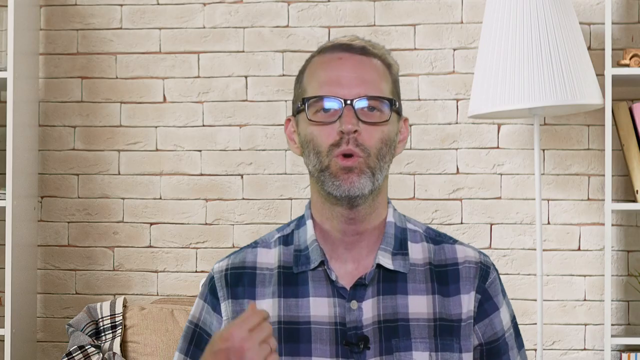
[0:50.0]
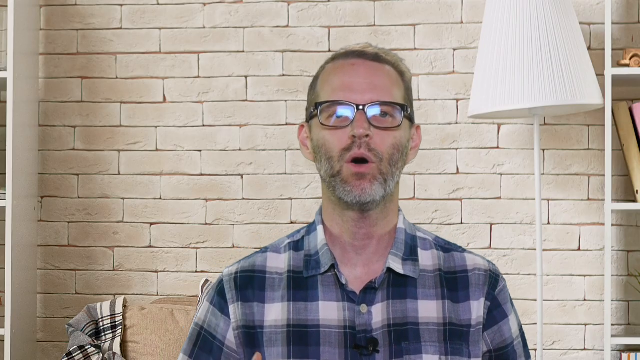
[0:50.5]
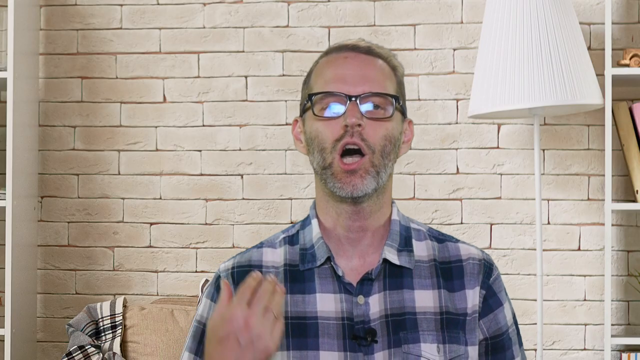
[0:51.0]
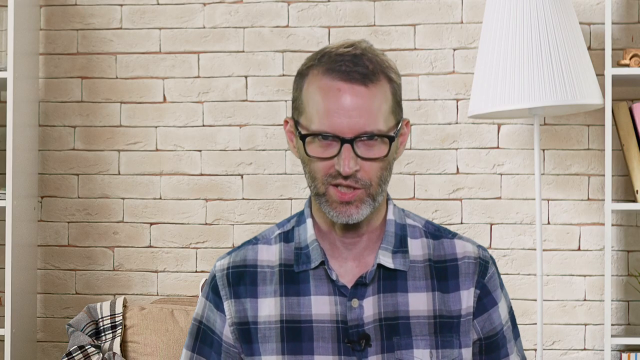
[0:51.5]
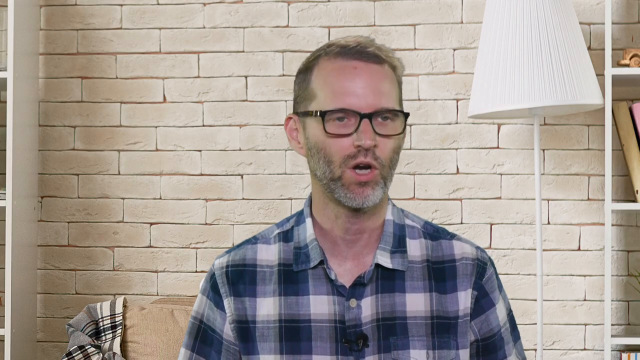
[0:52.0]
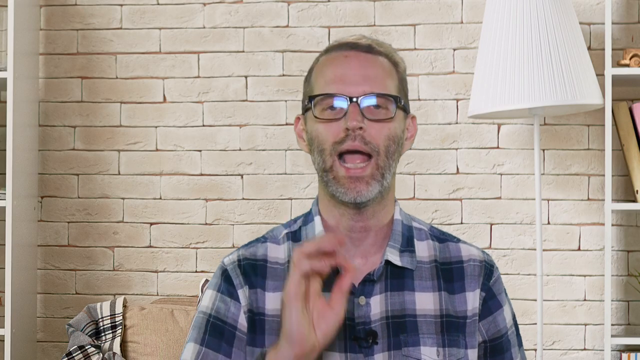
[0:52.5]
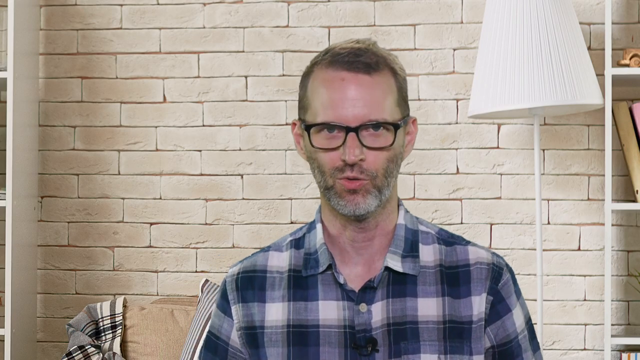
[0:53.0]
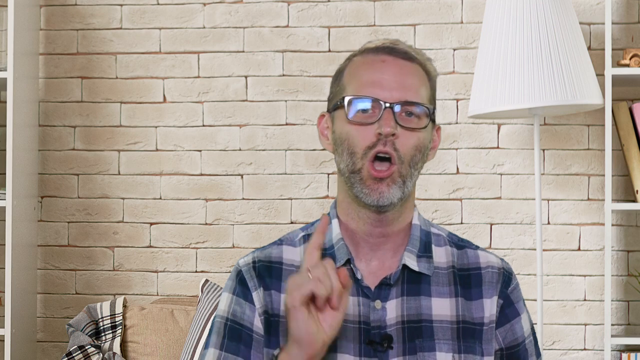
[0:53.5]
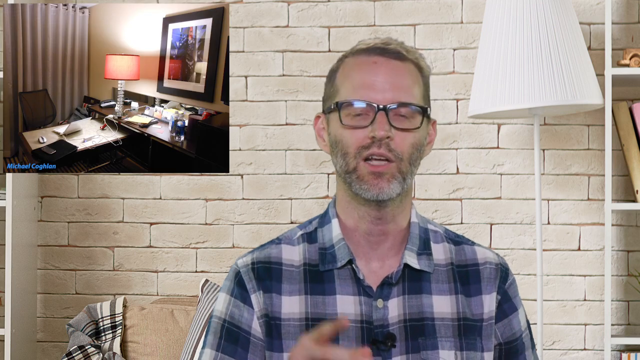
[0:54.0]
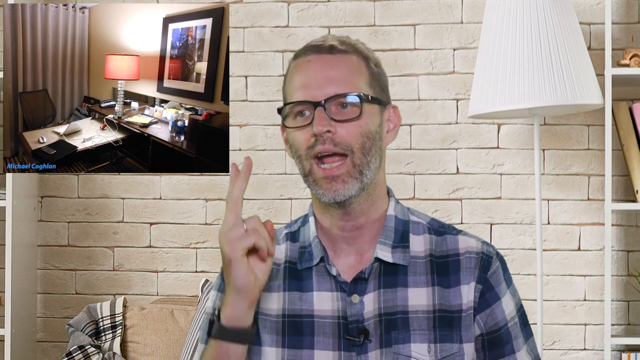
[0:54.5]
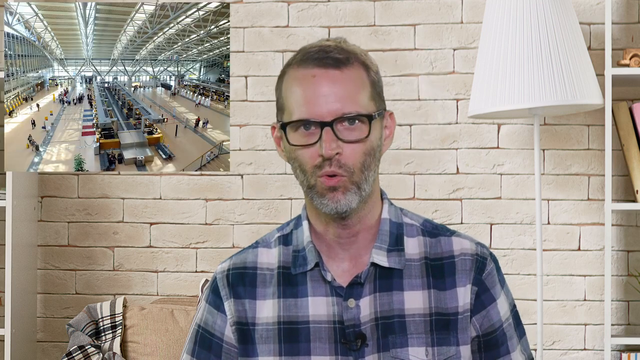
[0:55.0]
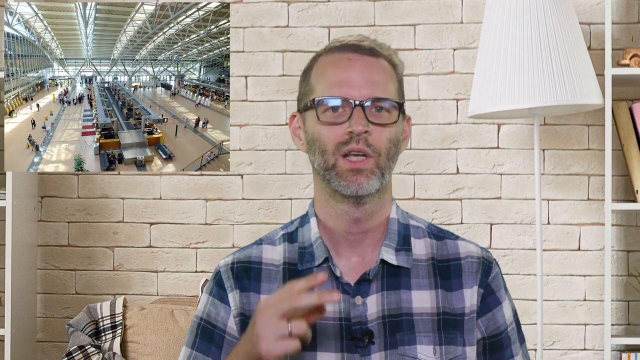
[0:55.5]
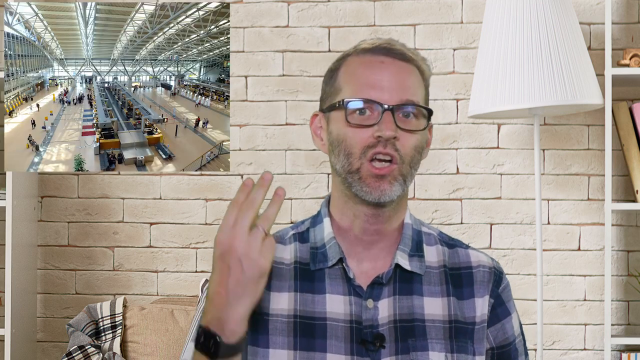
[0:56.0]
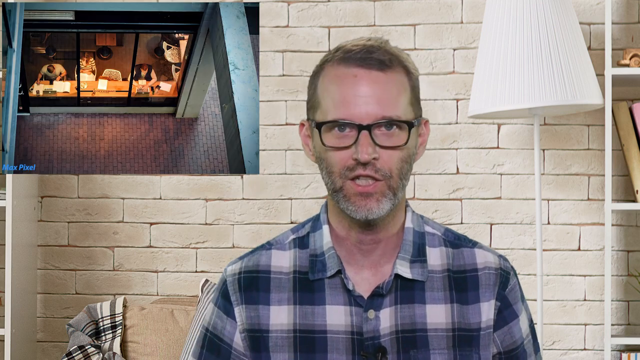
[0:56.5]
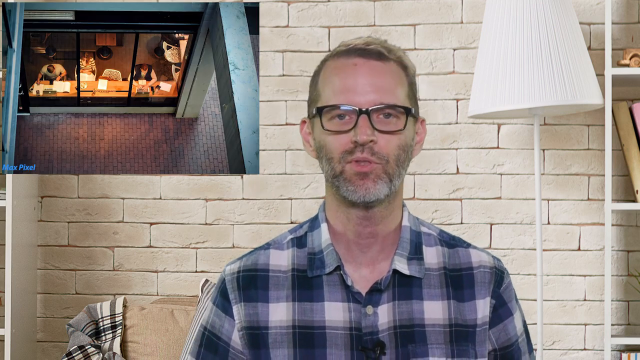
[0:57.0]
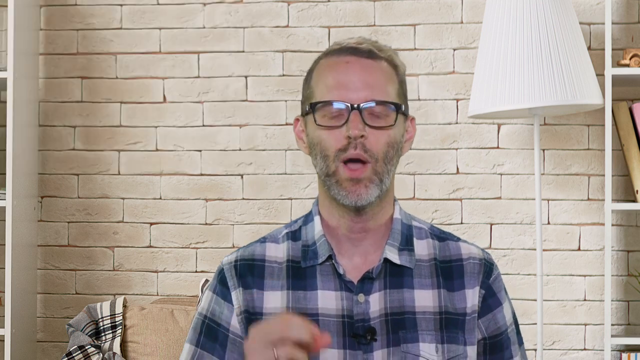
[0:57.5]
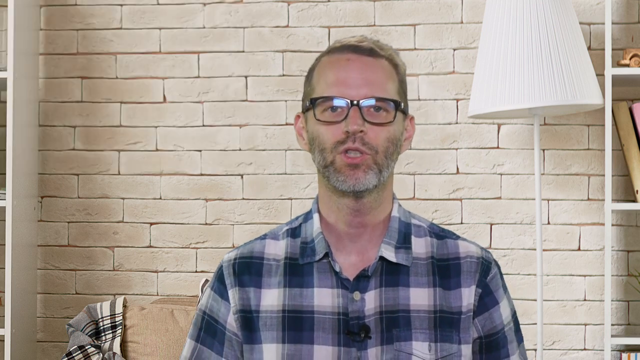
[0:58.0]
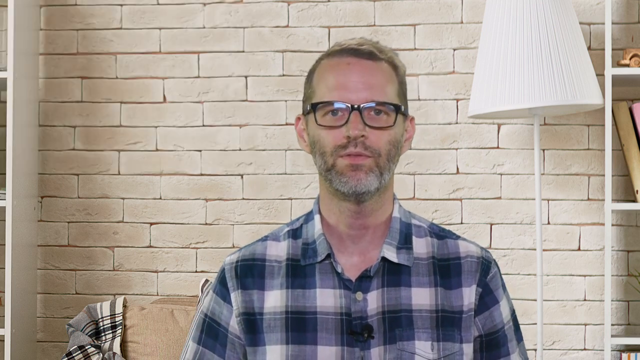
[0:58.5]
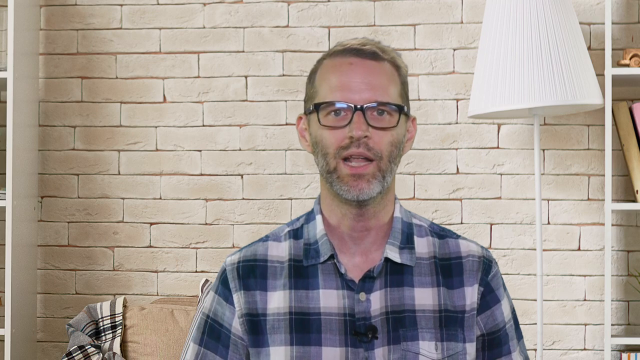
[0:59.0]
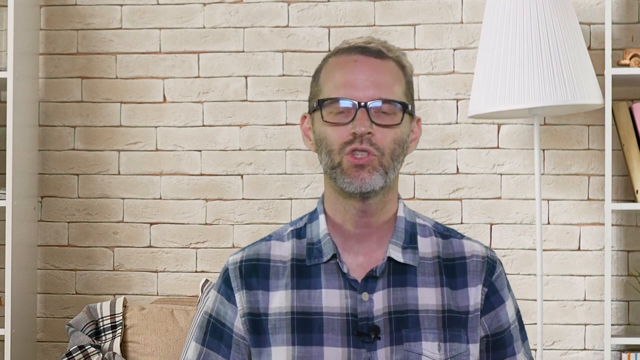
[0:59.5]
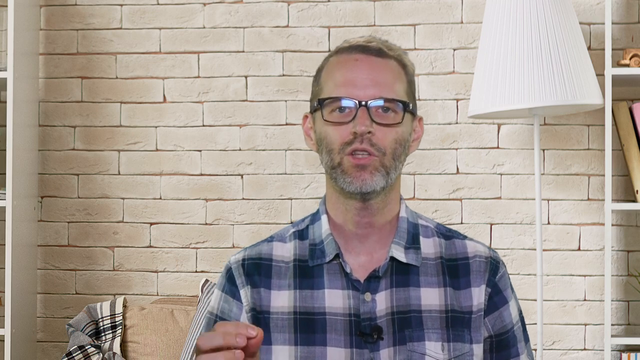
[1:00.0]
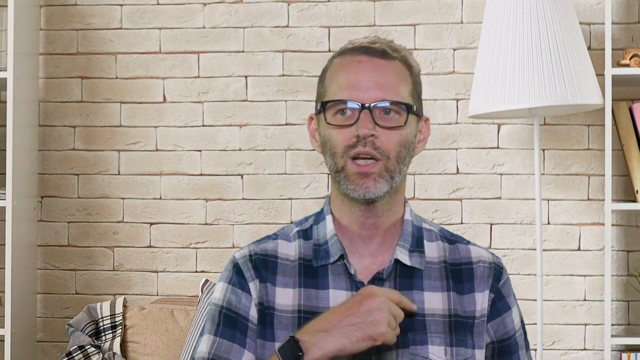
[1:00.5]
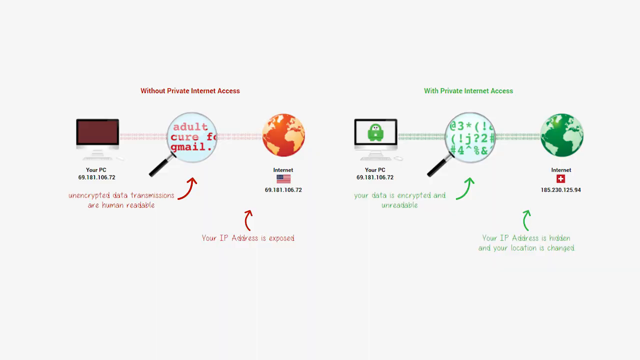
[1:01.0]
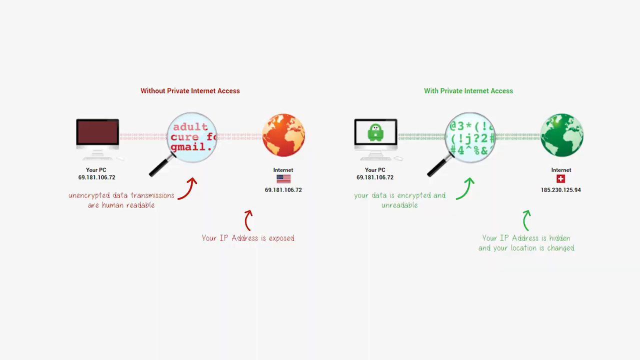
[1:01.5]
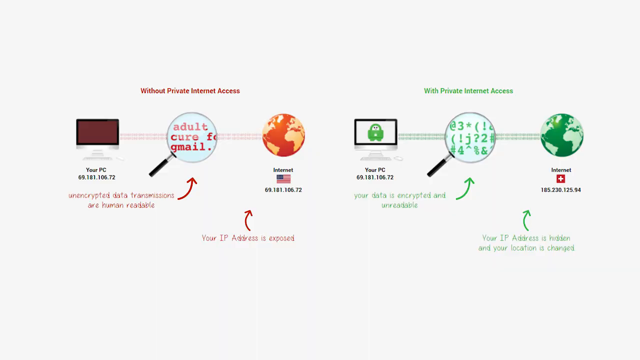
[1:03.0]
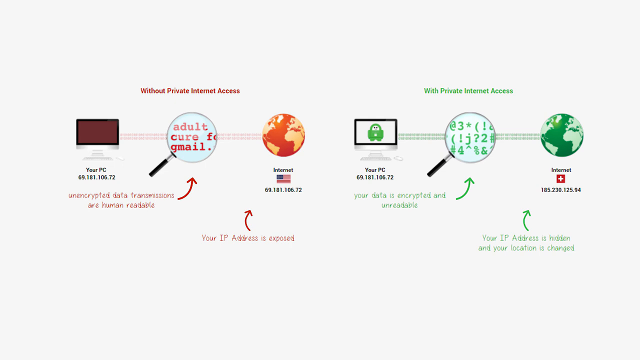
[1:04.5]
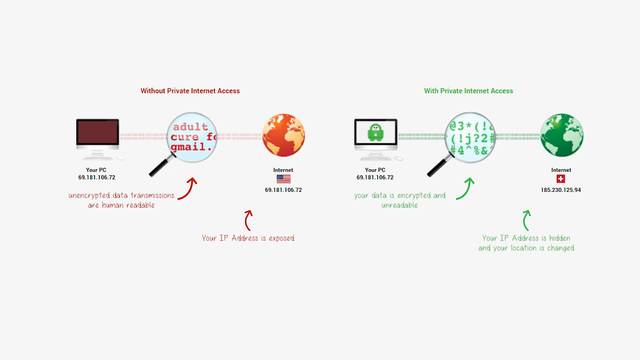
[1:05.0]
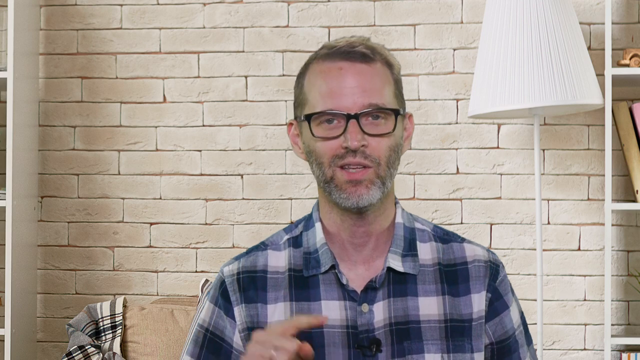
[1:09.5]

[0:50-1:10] The man talks directly to the camera with clear eye contact, in front of the same background with white walls. A bookshelf is visible, and another bookshelf can be seen higher up in the frame. He exaggerates his points with a lot of finger waving. In the top left, what looks like an image of a desk setup is shown while he keeps speaking, followed by kind of a house on a sunny day, and then what looks like a library or office setting where people are working on papers. He continues talking with small finger motions. A diagram then appears that seems to summarise how search functions work, showing a PC and a magnifying glass, with green features and the magnifying glass looking at green letters. It then returns to the man speaking.